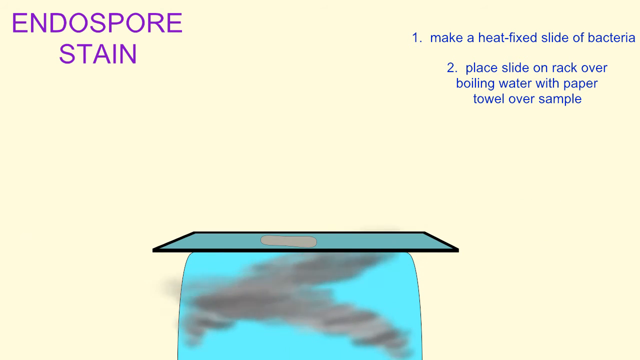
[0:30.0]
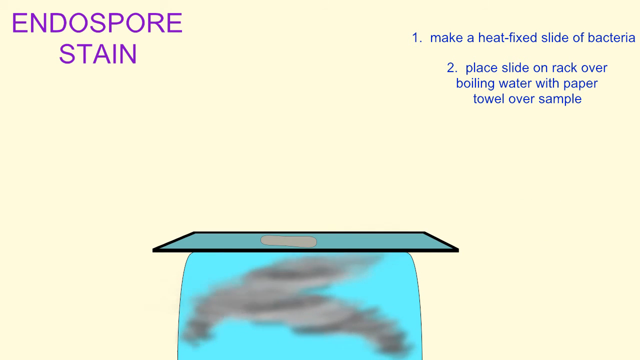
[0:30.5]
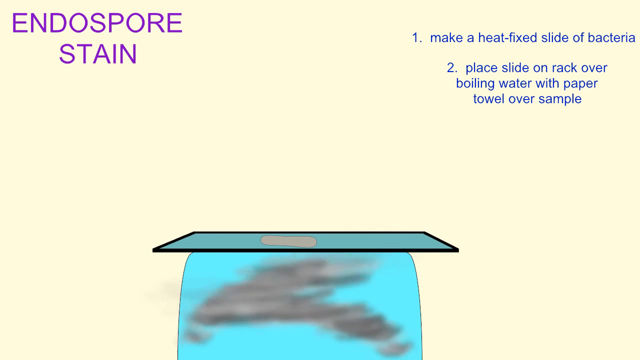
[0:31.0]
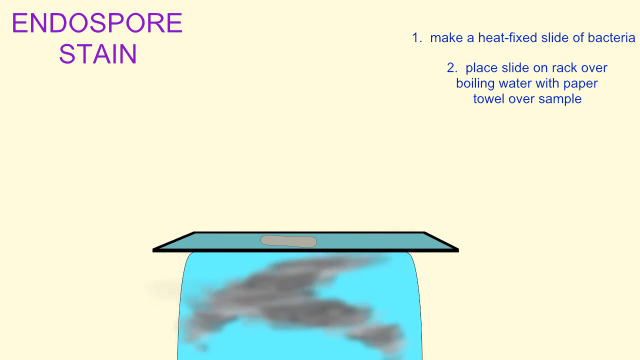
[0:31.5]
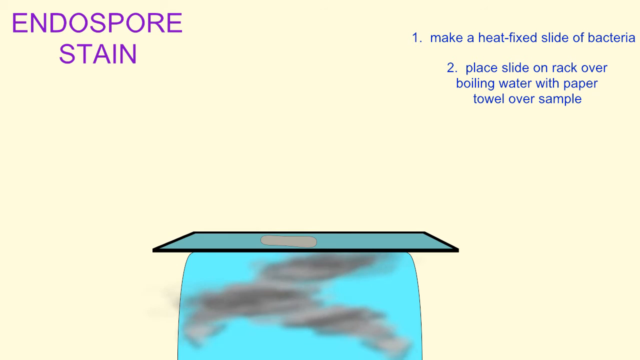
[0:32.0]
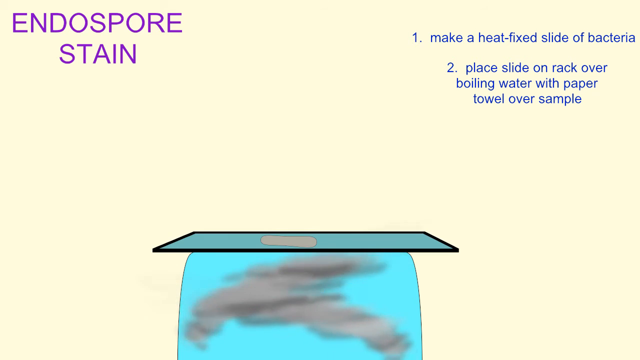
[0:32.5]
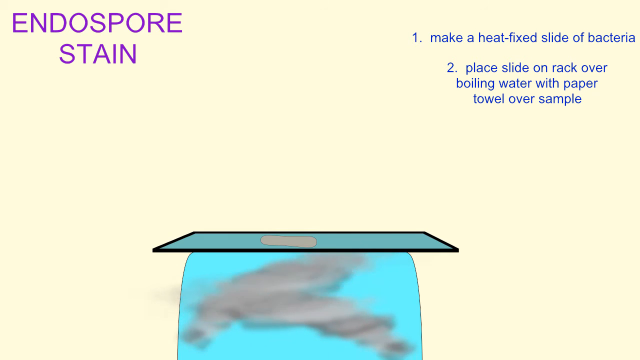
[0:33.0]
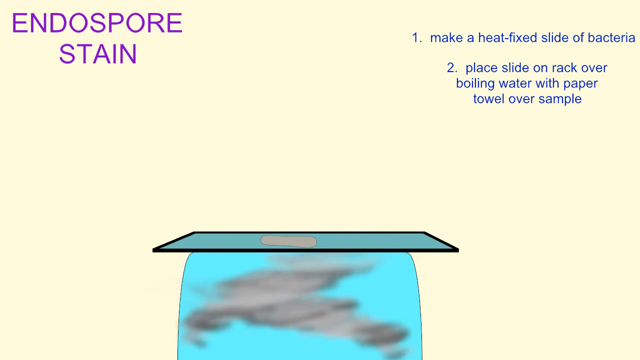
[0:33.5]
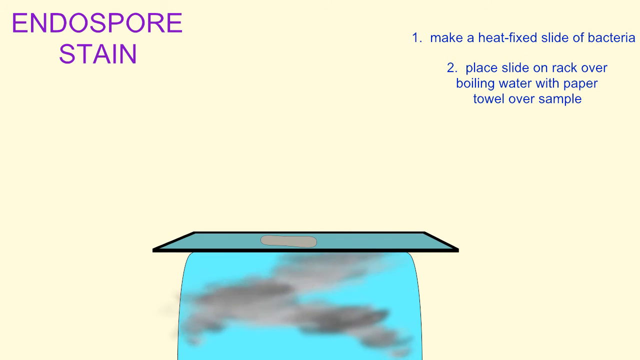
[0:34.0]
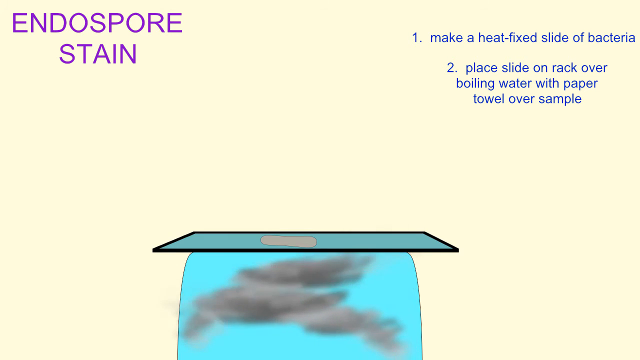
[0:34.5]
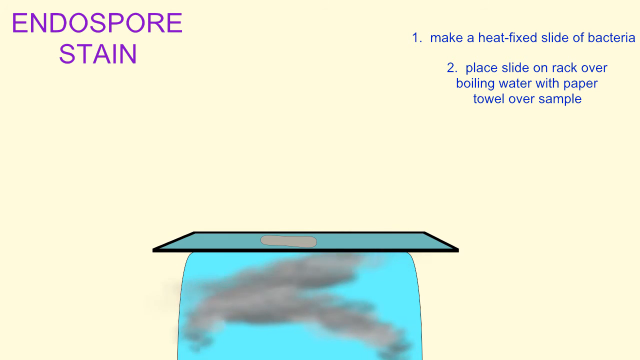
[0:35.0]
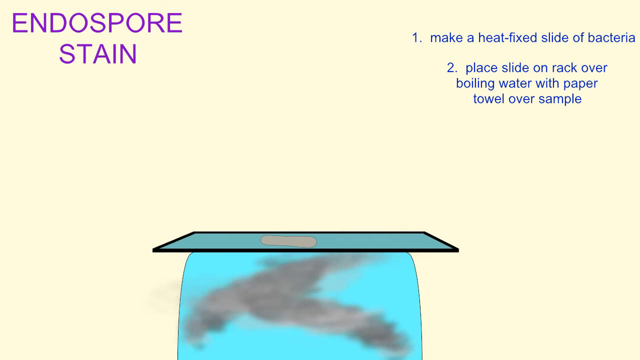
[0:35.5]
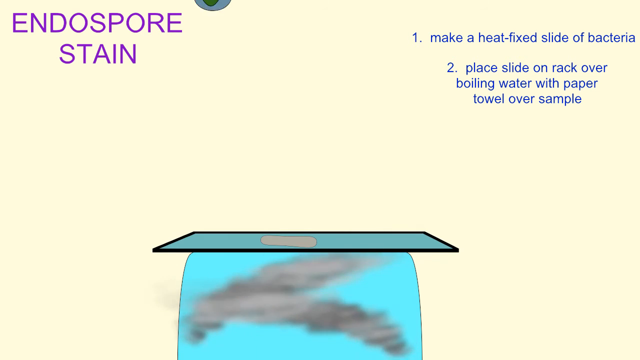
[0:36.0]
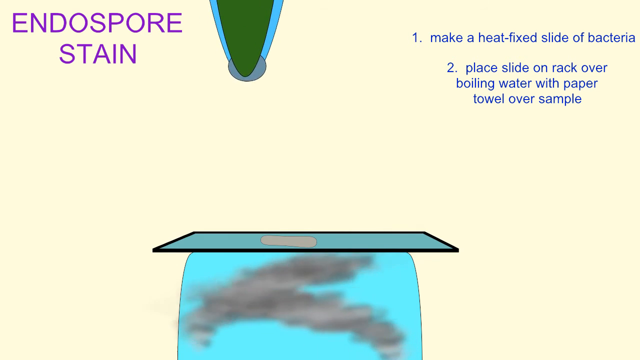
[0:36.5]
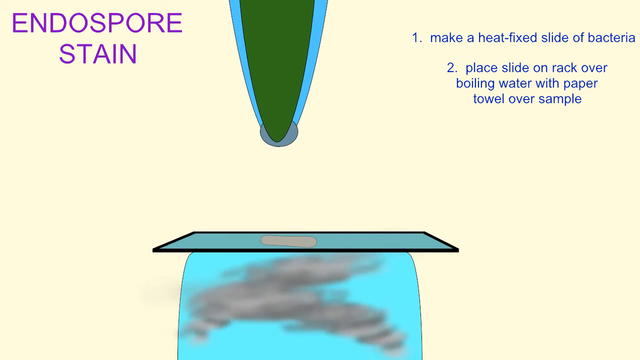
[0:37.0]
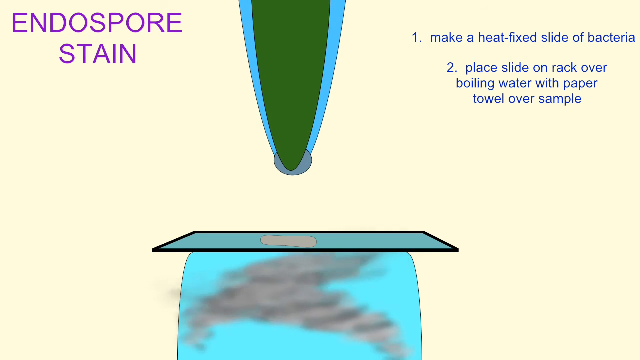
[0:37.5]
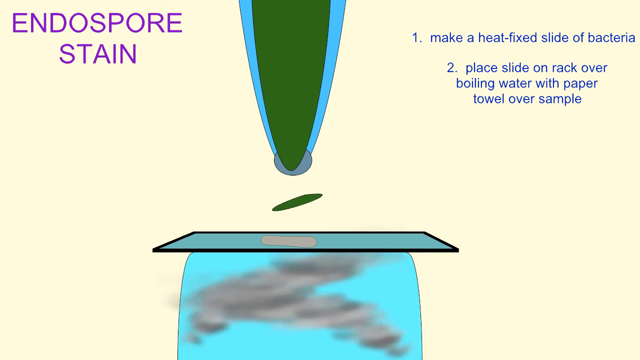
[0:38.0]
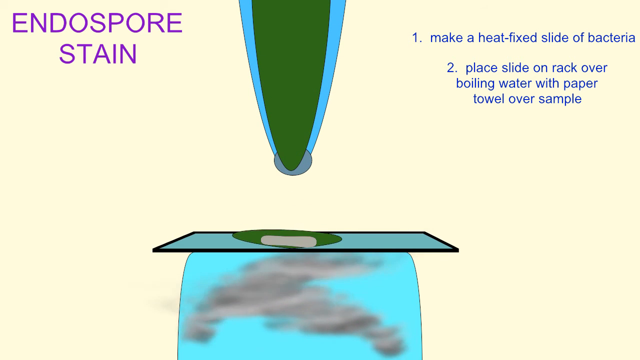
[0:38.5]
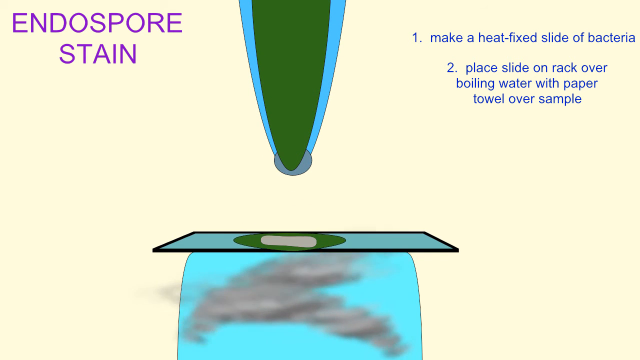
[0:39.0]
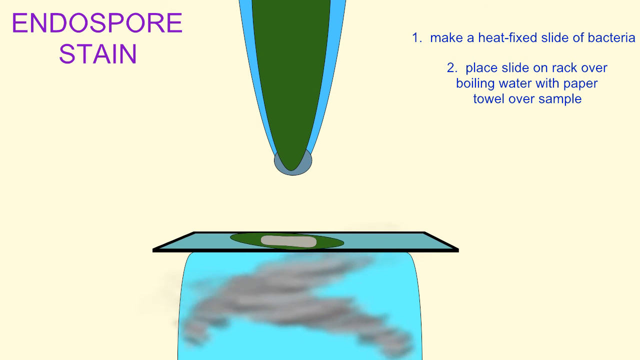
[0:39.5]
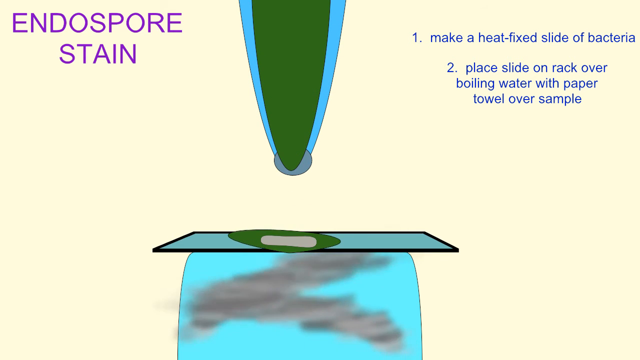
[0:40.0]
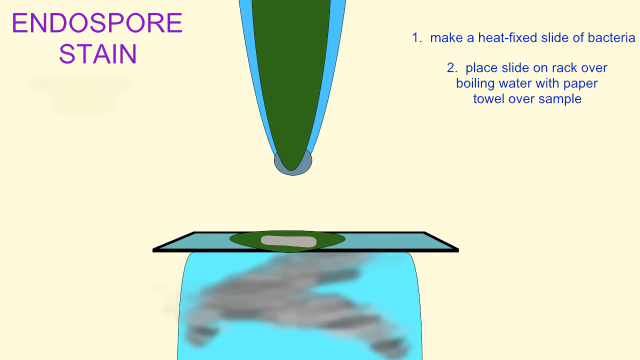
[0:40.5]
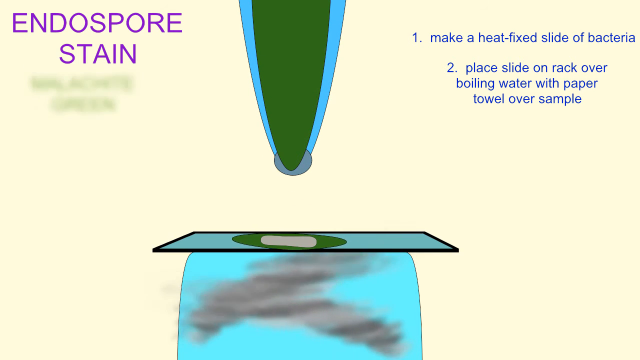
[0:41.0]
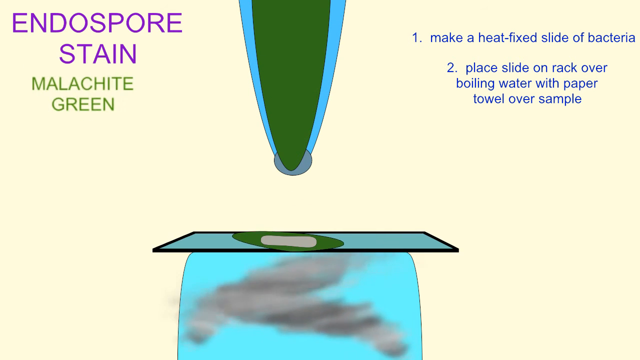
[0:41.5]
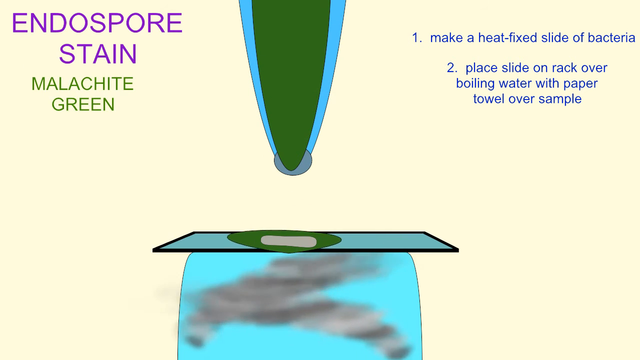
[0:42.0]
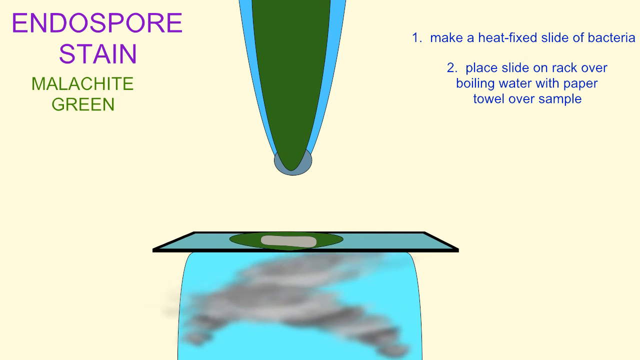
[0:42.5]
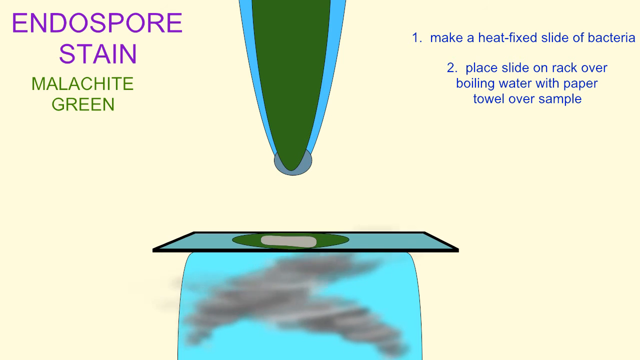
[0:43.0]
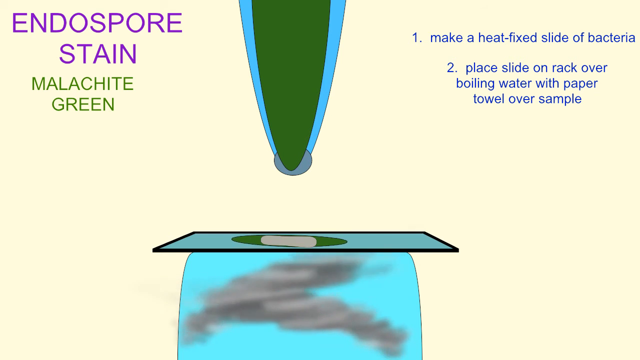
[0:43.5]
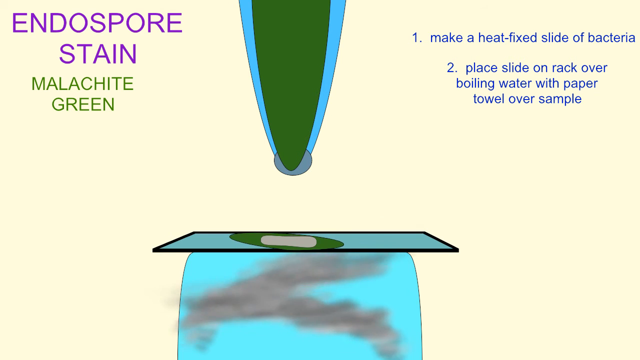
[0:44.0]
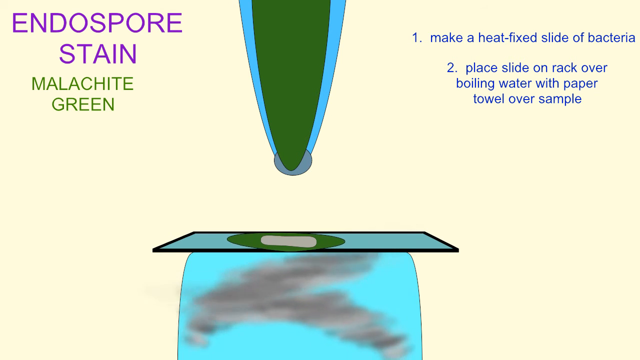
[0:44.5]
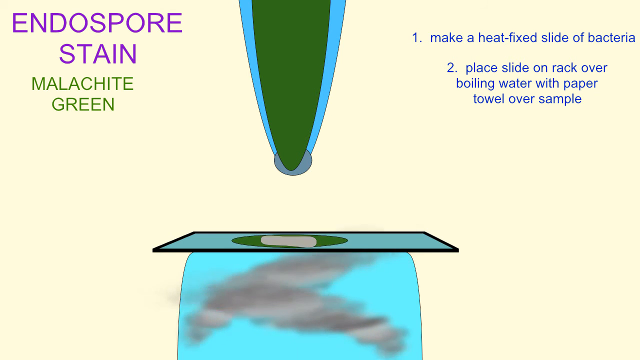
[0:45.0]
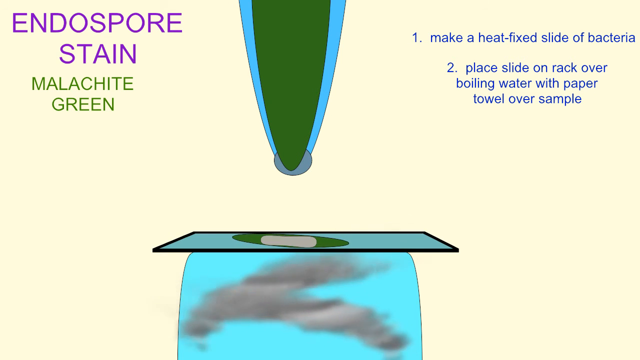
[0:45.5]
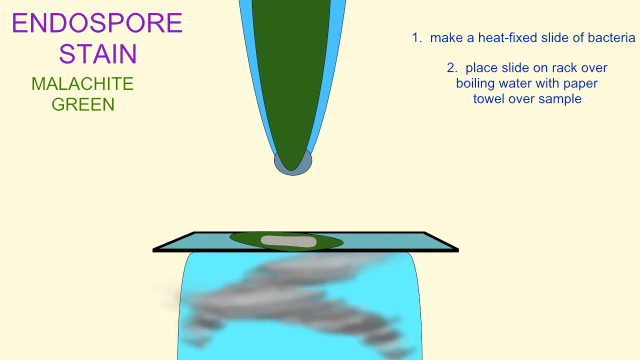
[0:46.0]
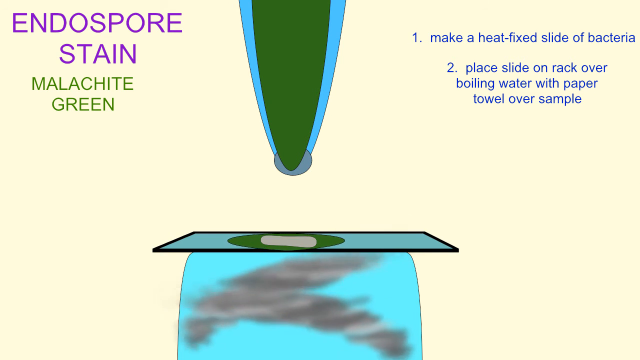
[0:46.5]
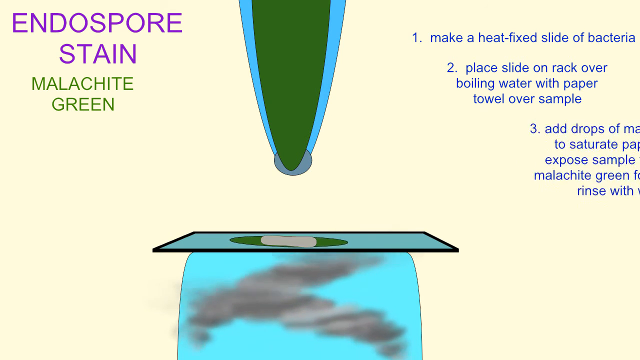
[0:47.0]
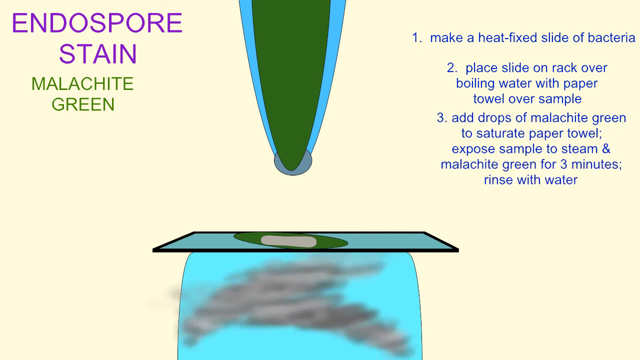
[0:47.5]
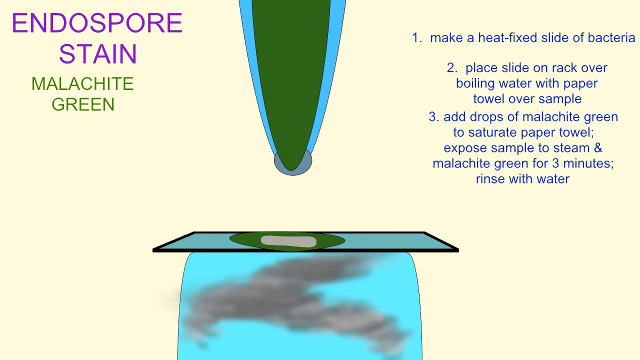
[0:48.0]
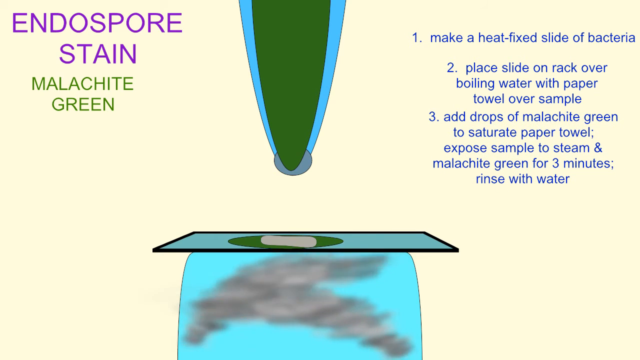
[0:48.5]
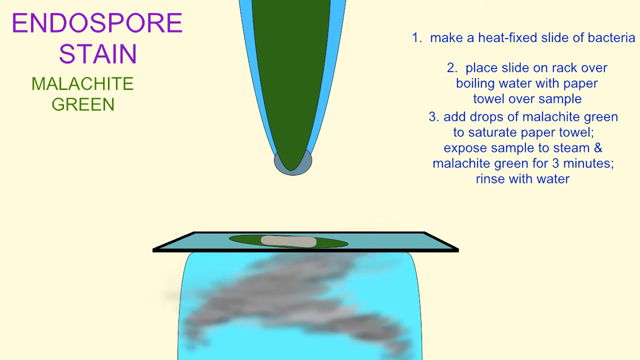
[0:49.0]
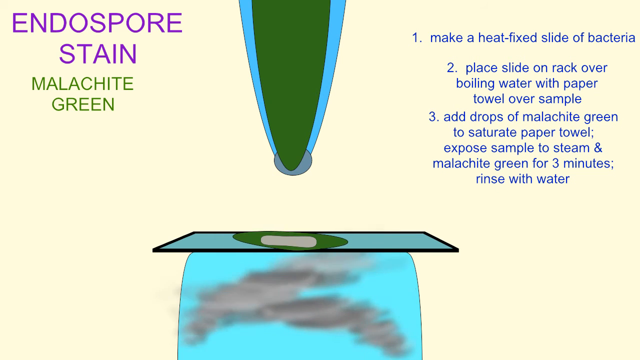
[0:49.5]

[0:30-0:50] Medium to dark gray smoke swirls around on a teal background. Another object appears: it has a blue background with dark green on top of the blue, and a circular gray object between the two color layers. It emits a green light onto the mat where the other gray object is. On the left, "malachite green" appears underneath "endospore stain." A number three comes onto the slide on the right with the text "add drops of malachite green to saturate paper towel. Expose sample to steam and malachite green for three minutes. Rinse with water." The smoke continues underneath the object that is on top of the heat fixed slide.